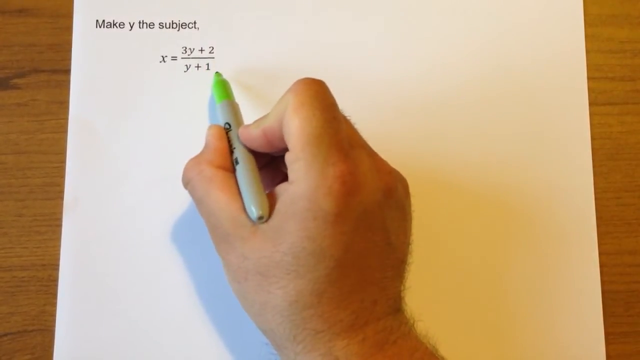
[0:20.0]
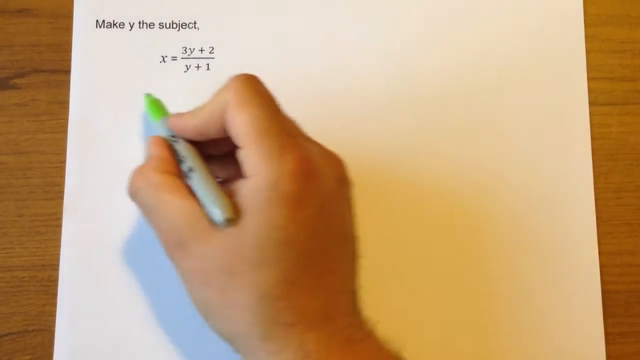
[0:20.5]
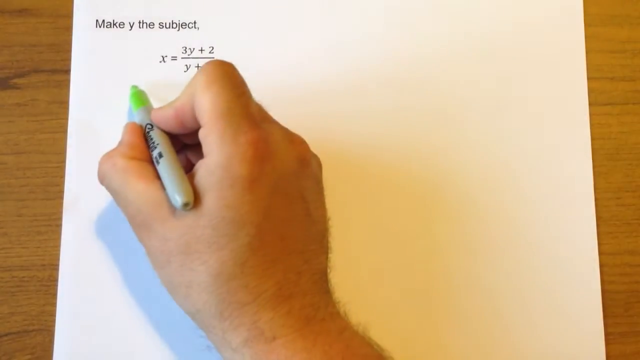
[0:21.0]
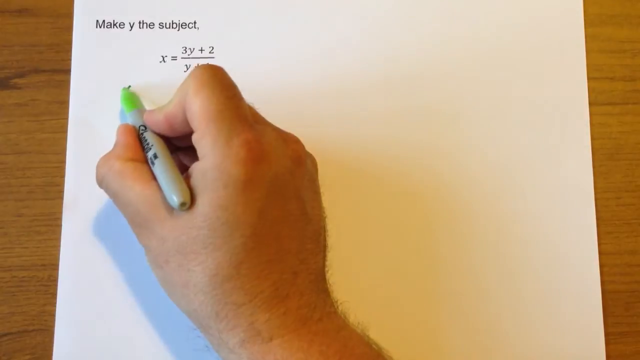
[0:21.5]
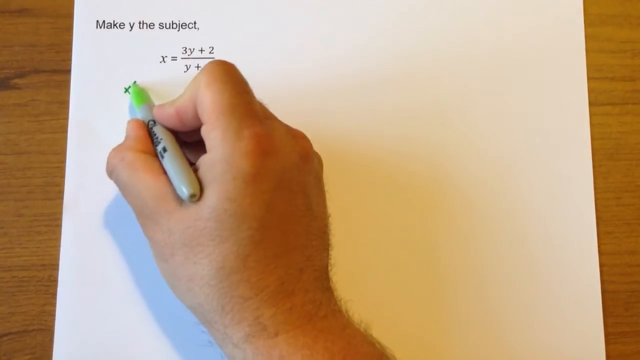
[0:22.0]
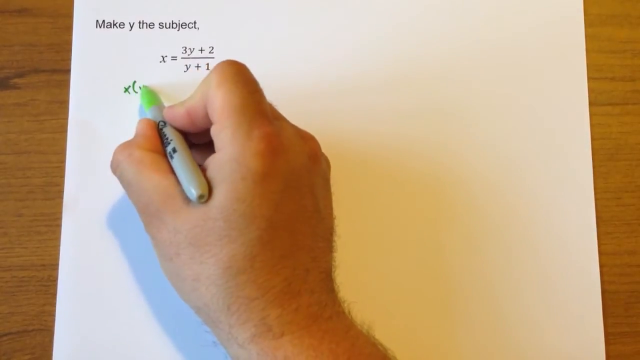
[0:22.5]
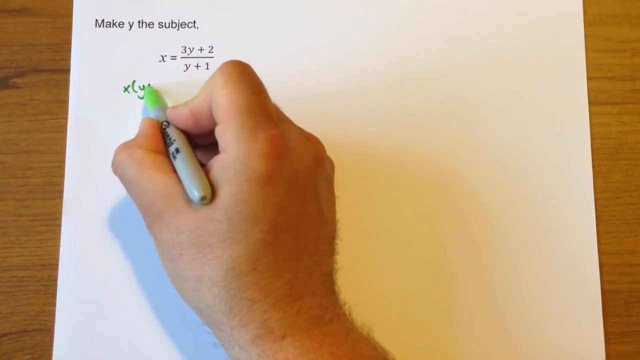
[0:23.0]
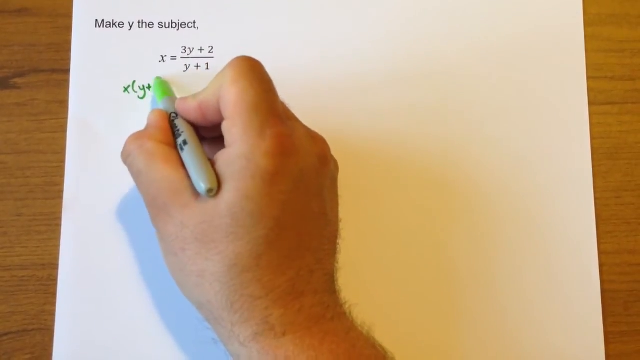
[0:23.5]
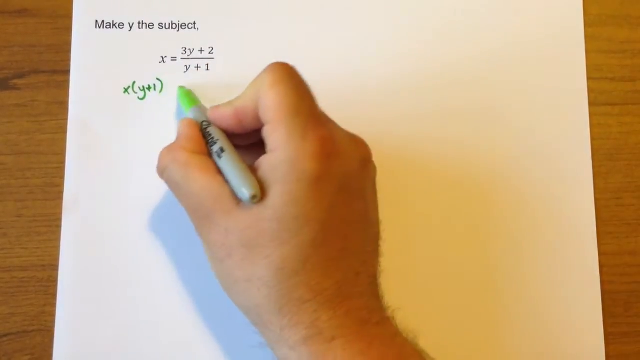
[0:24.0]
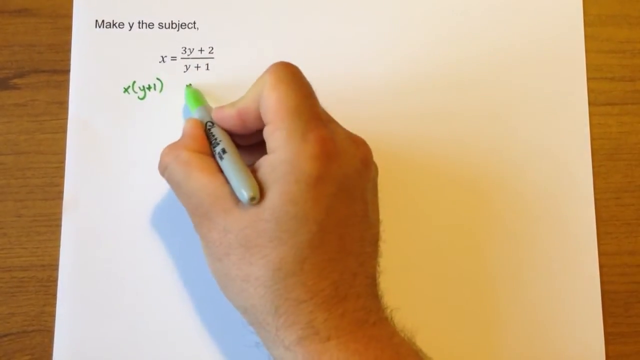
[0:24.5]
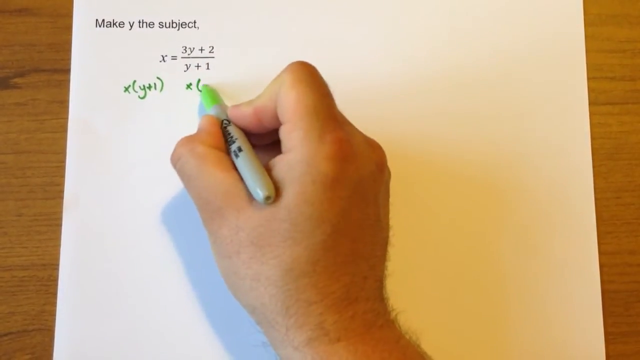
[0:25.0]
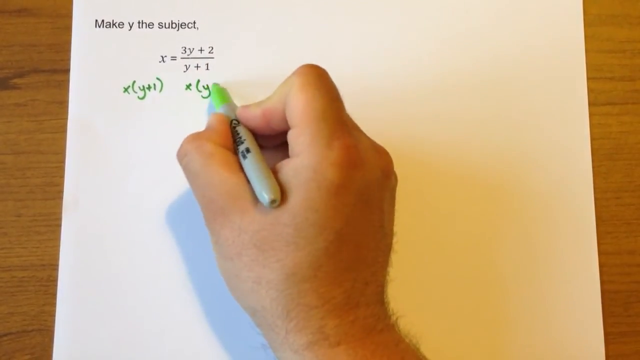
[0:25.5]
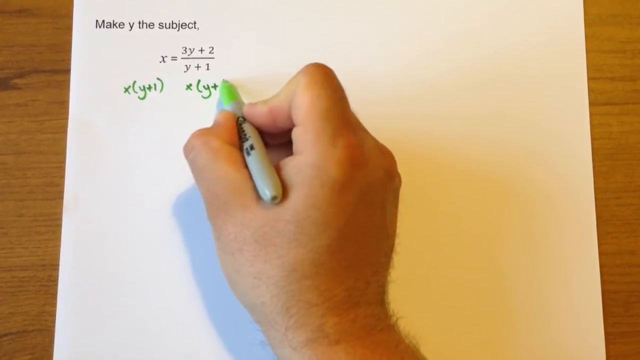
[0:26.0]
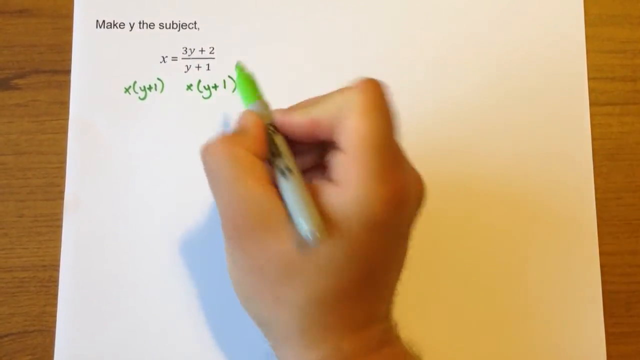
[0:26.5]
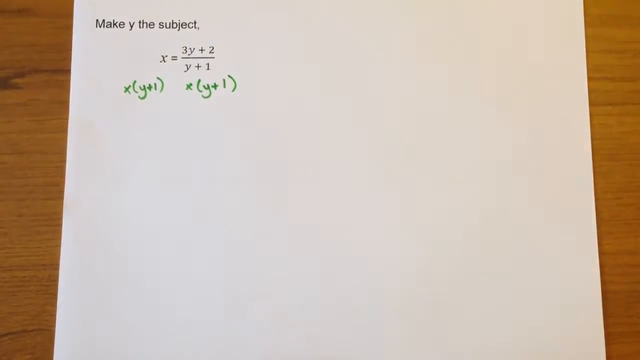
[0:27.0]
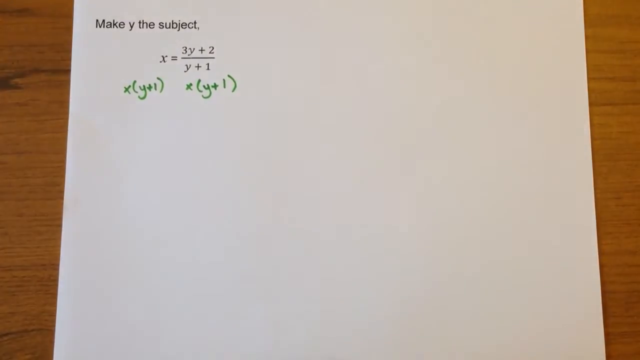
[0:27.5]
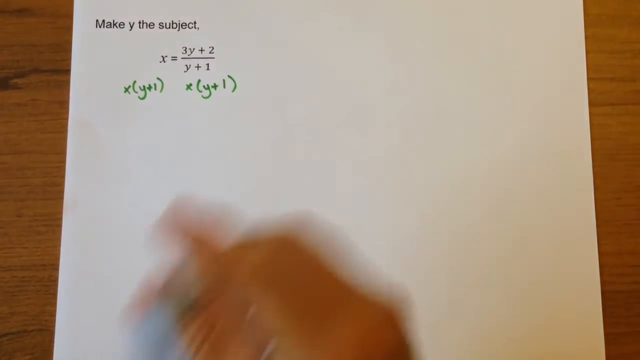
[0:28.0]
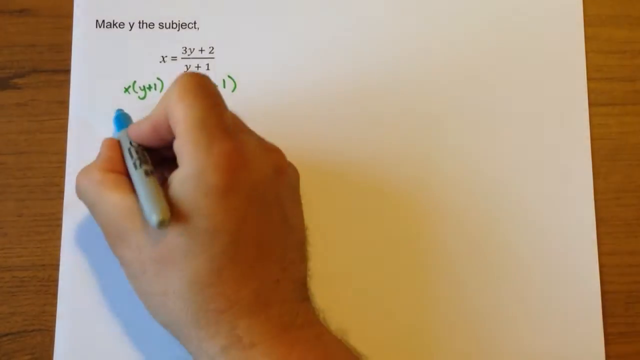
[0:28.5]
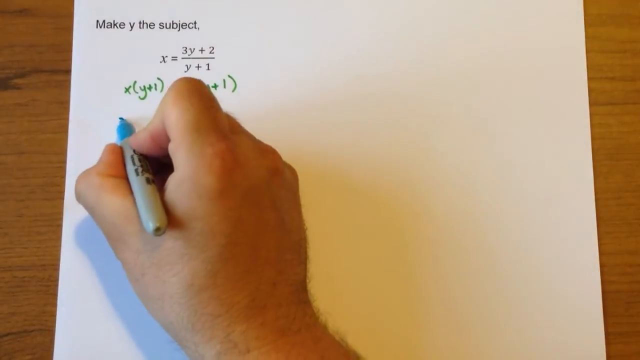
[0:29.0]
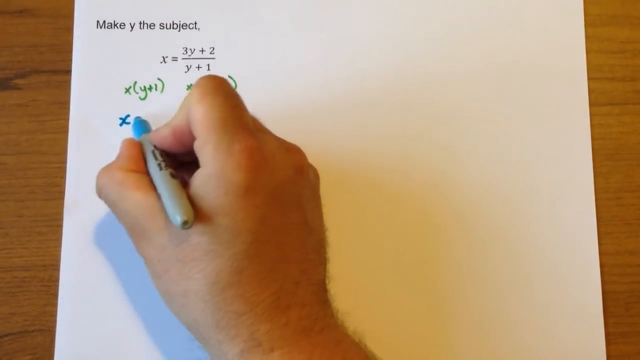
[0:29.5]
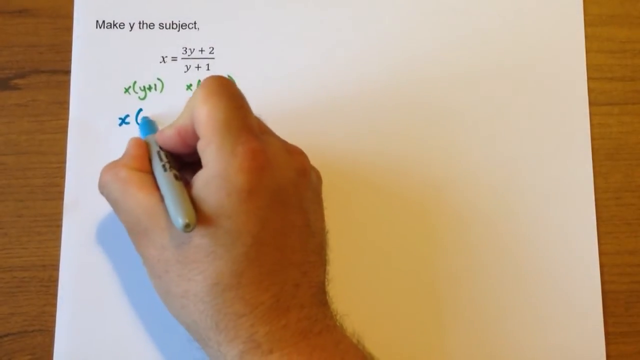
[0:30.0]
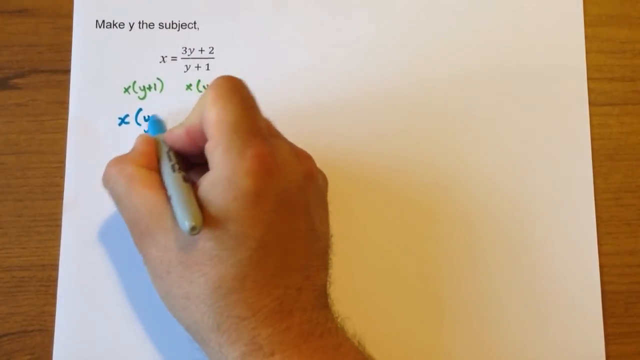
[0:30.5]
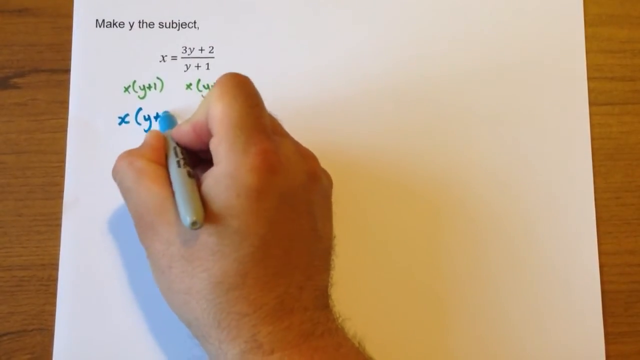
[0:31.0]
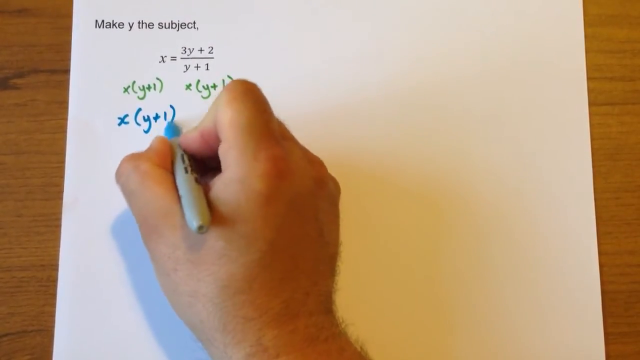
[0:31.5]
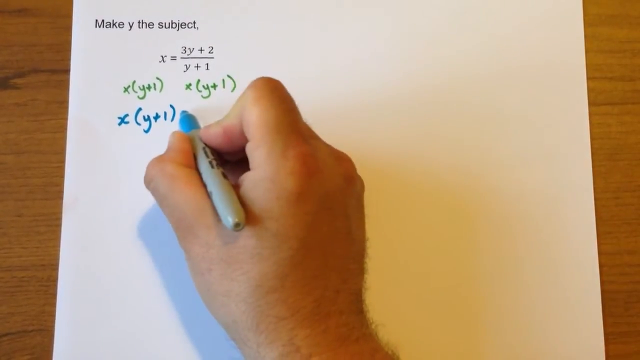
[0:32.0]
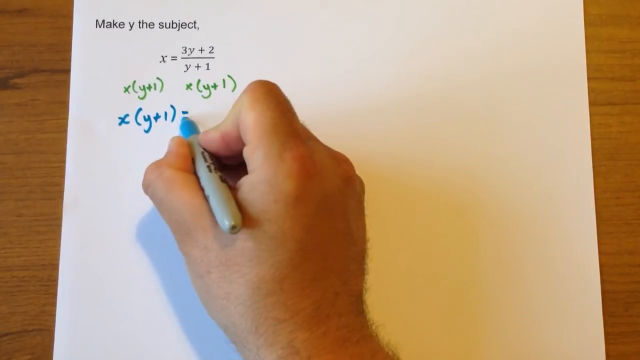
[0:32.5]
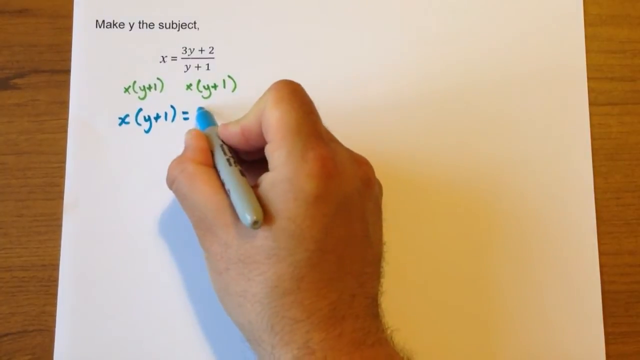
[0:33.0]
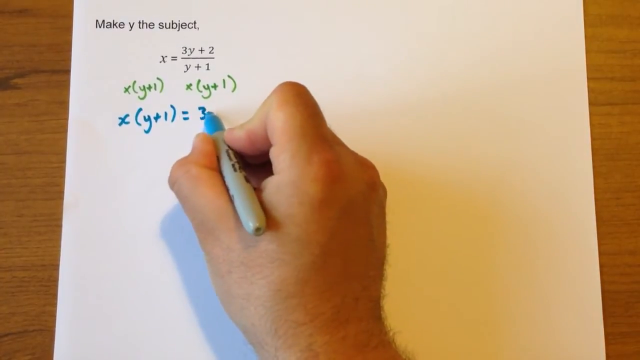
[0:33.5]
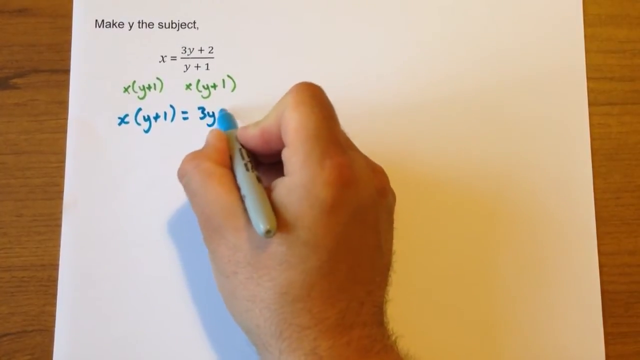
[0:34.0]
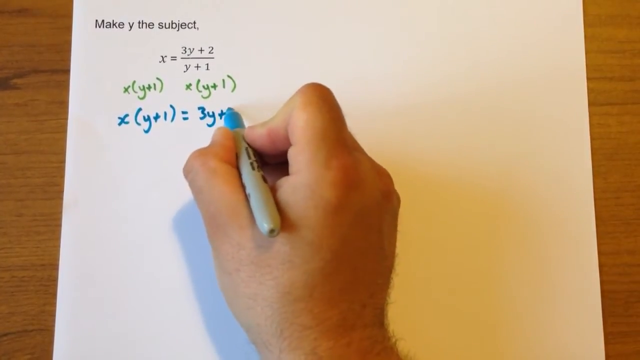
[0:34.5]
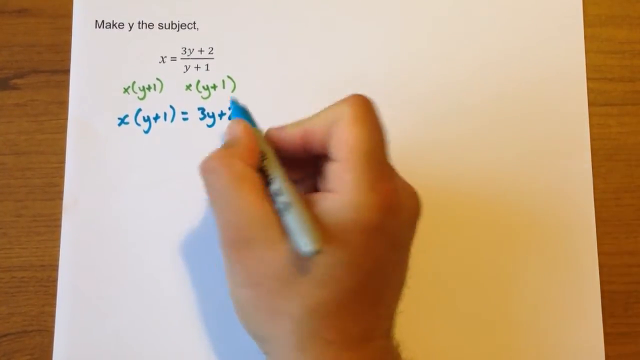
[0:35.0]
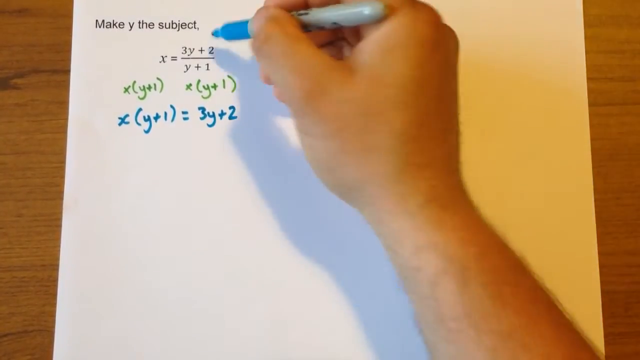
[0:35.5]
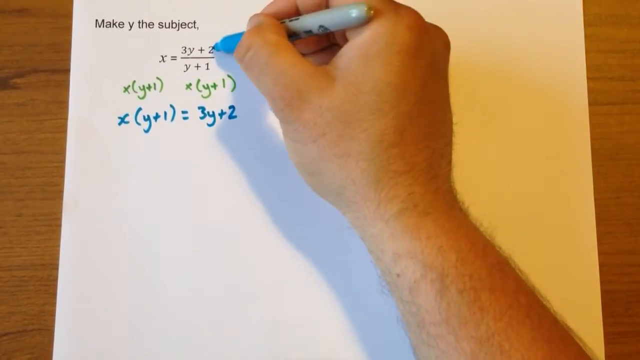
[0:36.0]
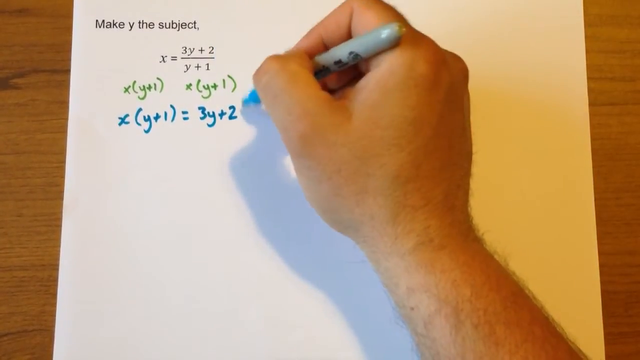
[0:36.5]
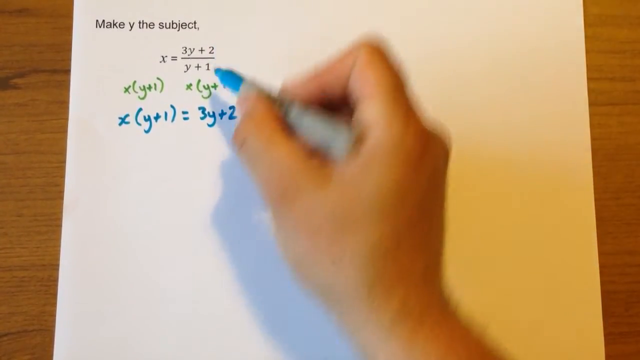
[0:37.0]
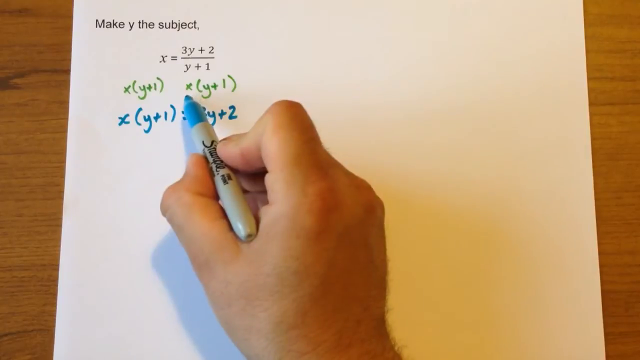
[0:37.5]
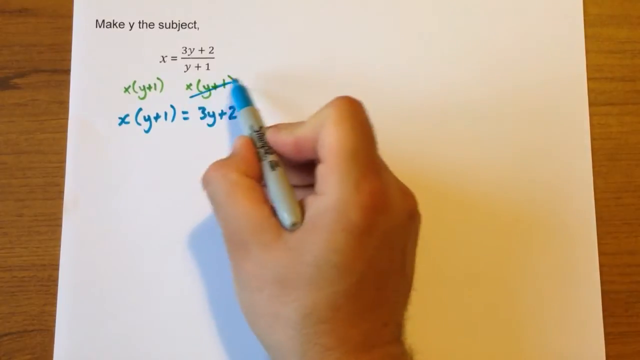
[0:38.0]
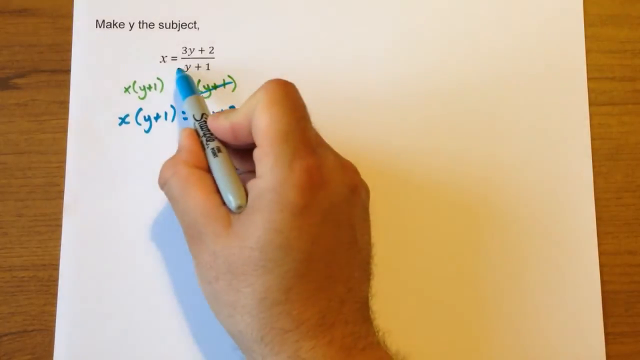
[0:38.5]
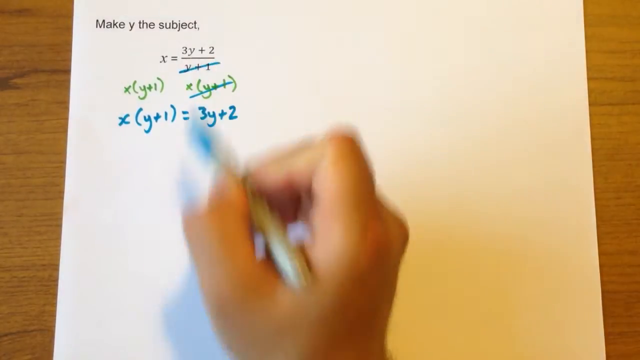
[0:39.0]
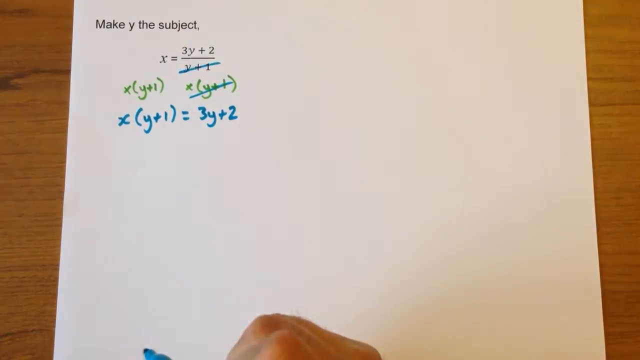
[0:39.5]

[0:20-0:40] The white piece of paper is on a brown table. At the top left, in black, is "make y the subject," followed by a comma, and underneath it is the equation x = (3y + 2)/(y + 1). A male, Caucasian hand holding a green highlighter writes x times (y + 1), and then the same, x times (y + 1), again. Underneath that, in blue, he has written x(y + 1) = 3y + 2. He then points to the original equation at the top and crosses out what he previously wrote in green on the right side.